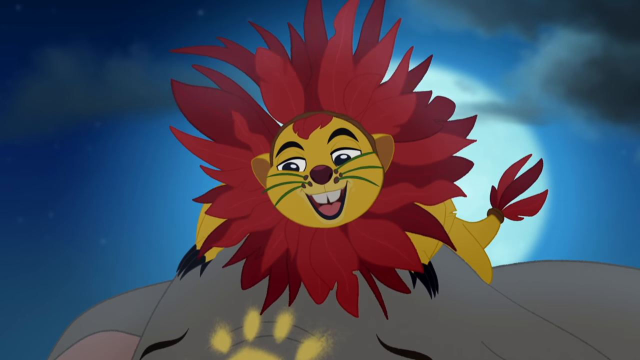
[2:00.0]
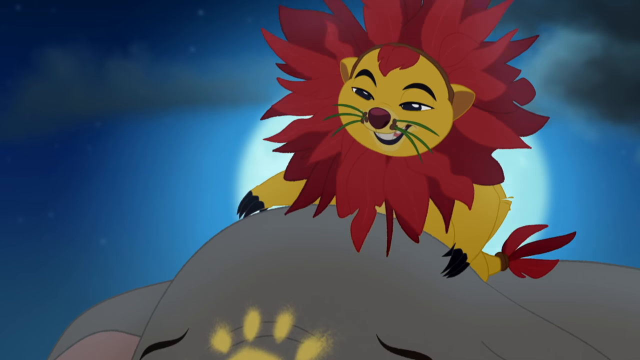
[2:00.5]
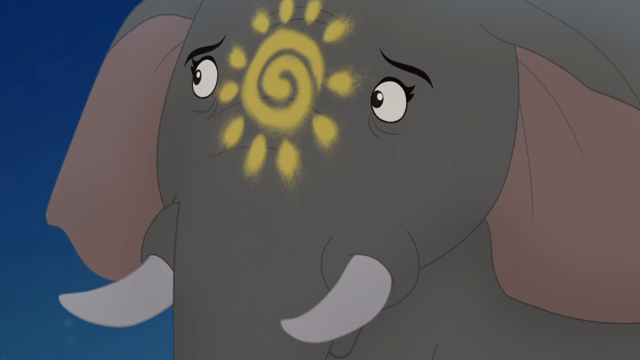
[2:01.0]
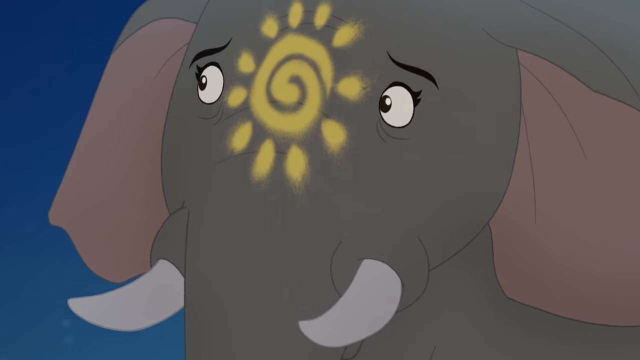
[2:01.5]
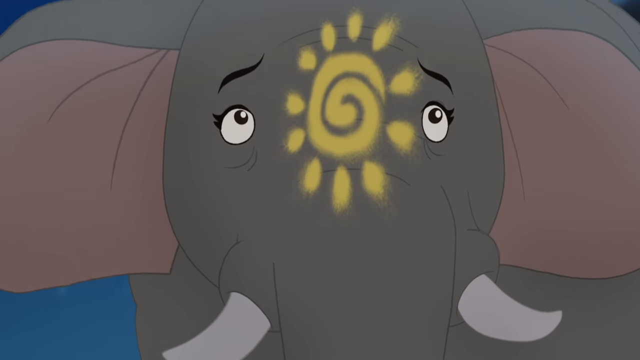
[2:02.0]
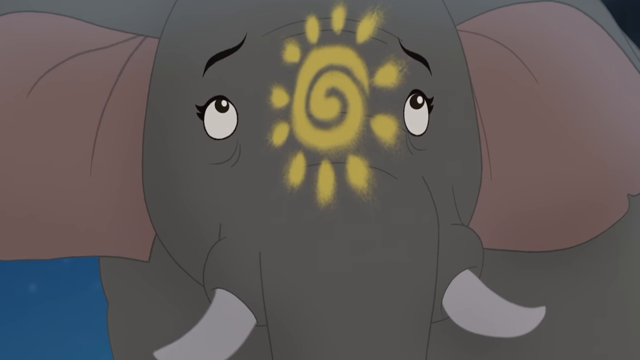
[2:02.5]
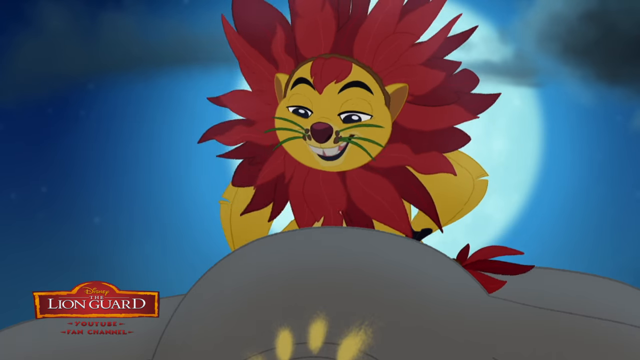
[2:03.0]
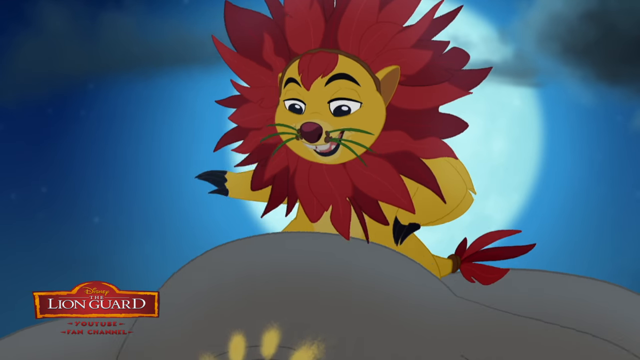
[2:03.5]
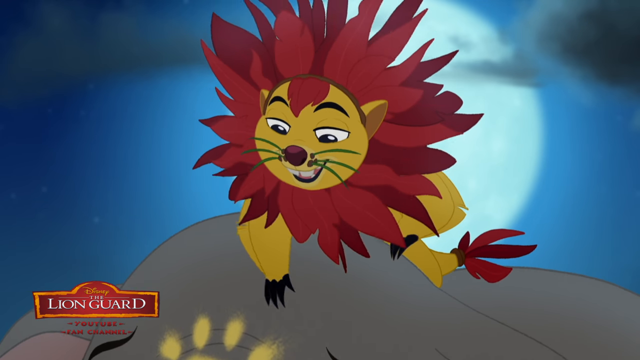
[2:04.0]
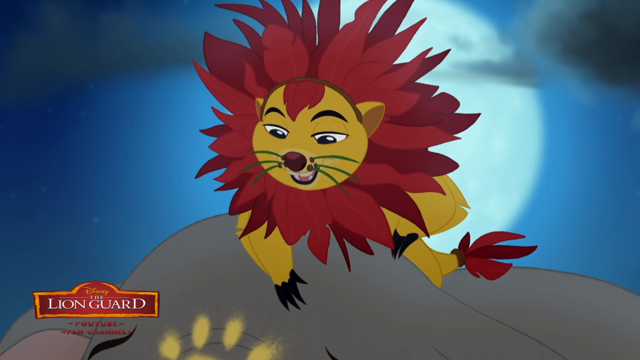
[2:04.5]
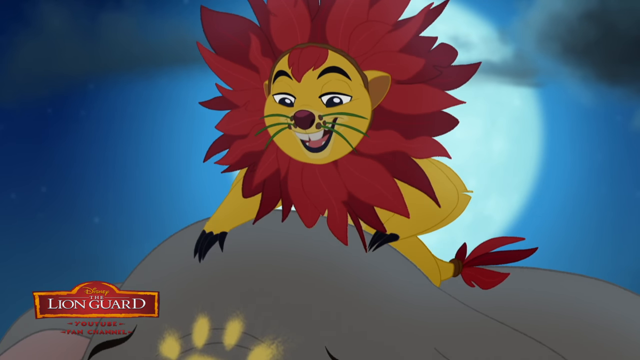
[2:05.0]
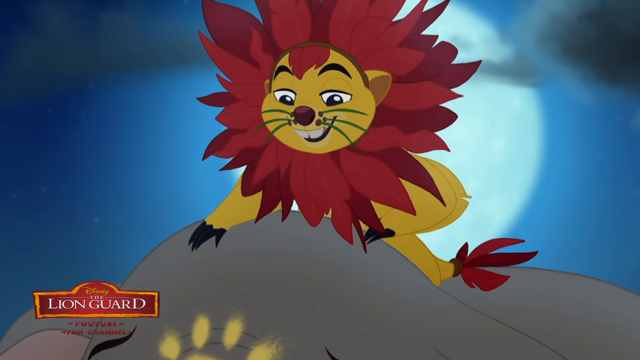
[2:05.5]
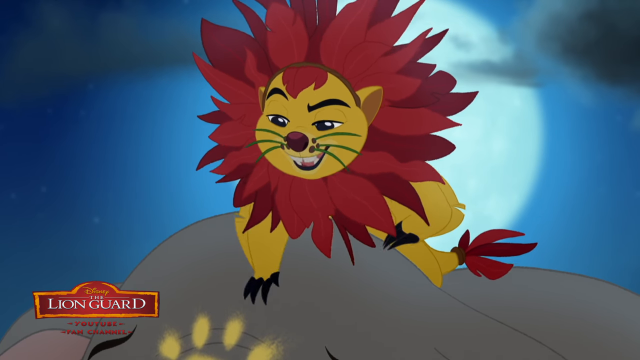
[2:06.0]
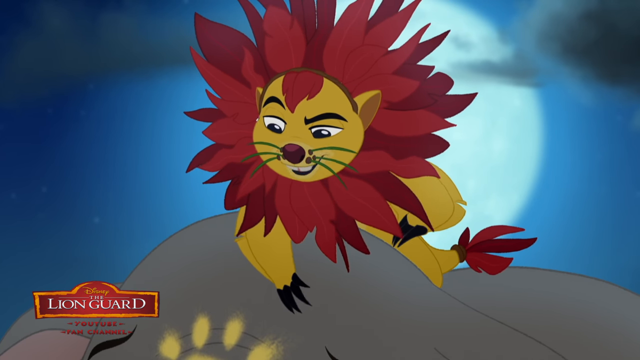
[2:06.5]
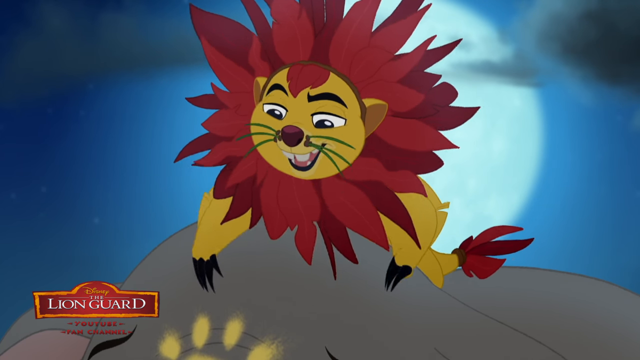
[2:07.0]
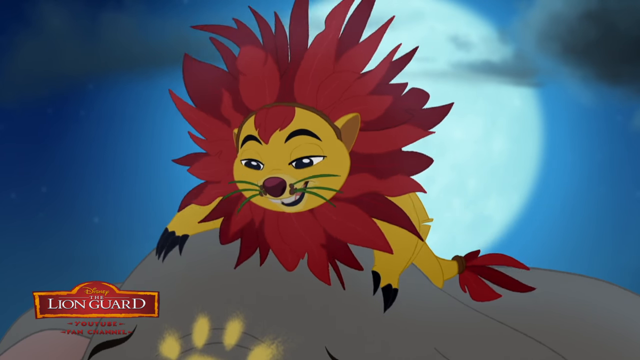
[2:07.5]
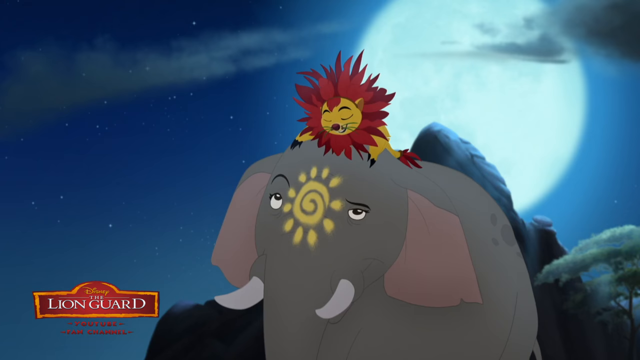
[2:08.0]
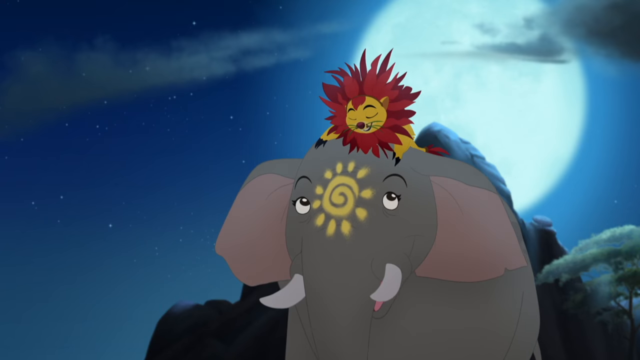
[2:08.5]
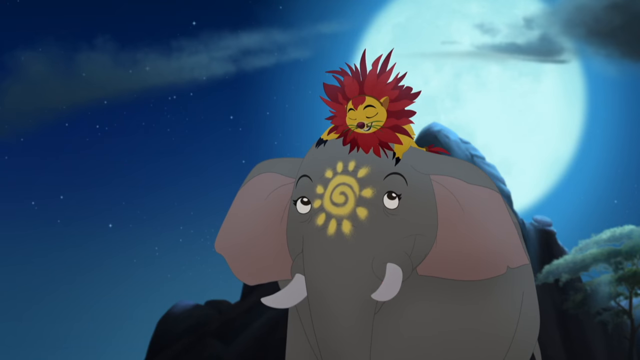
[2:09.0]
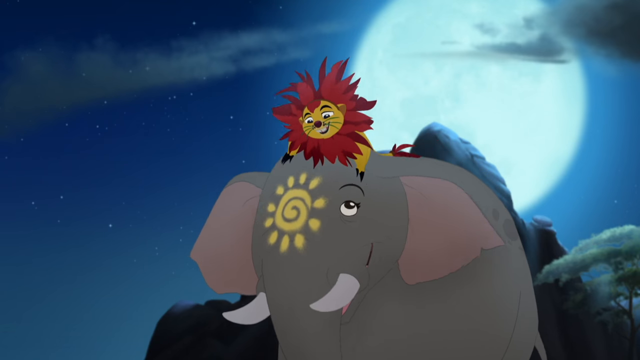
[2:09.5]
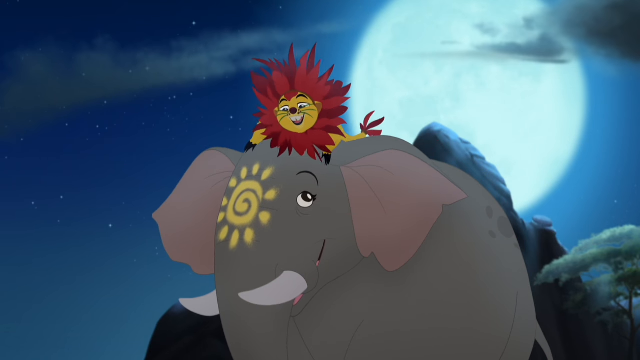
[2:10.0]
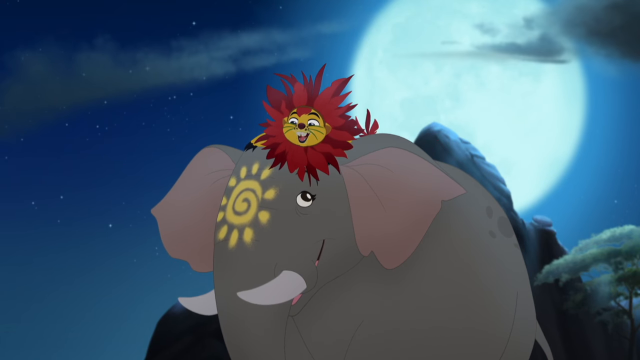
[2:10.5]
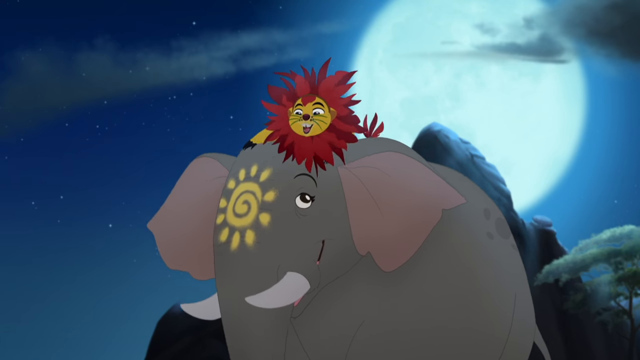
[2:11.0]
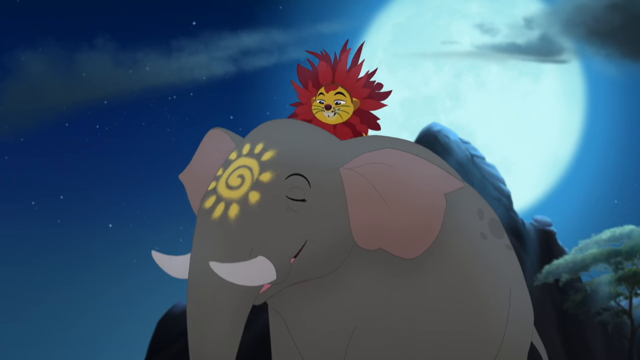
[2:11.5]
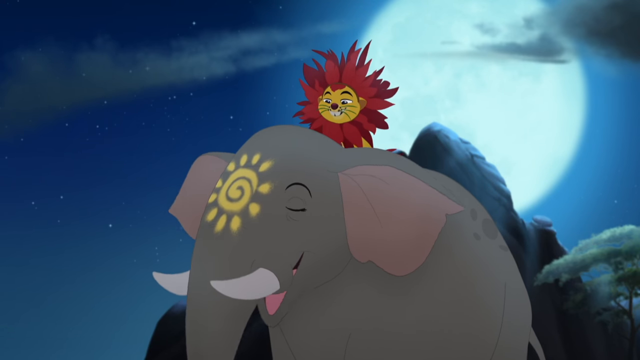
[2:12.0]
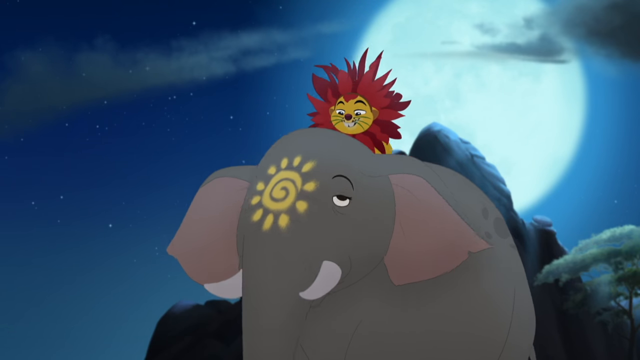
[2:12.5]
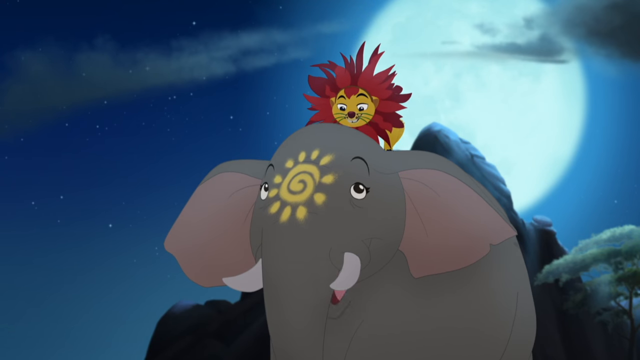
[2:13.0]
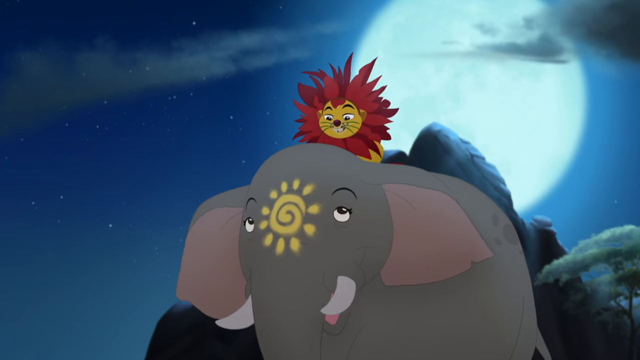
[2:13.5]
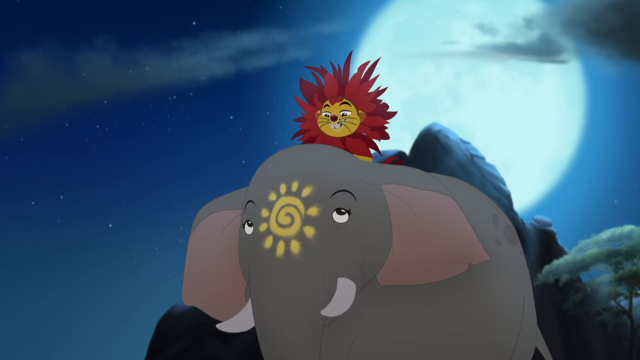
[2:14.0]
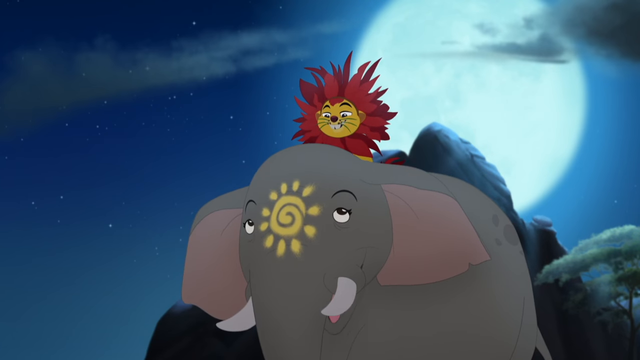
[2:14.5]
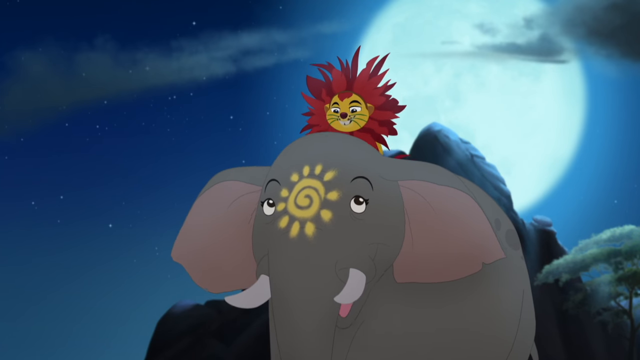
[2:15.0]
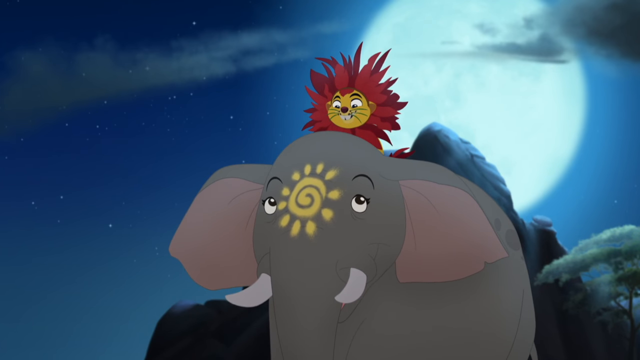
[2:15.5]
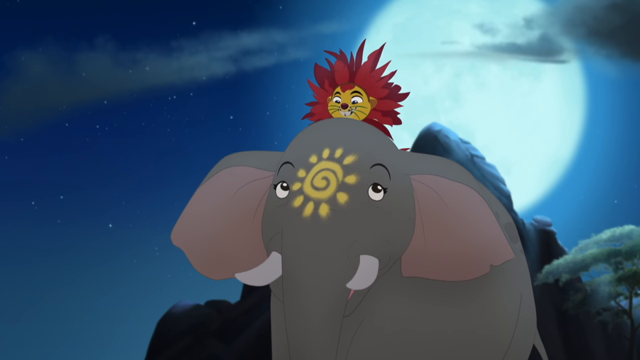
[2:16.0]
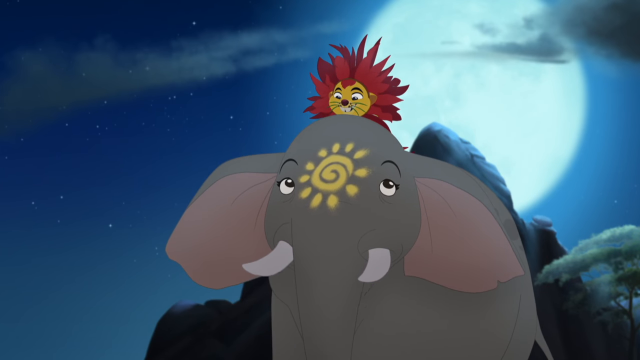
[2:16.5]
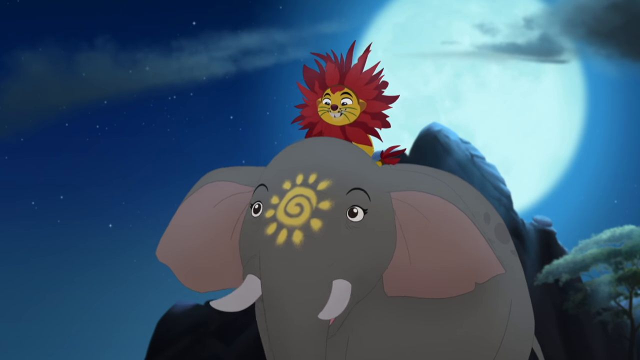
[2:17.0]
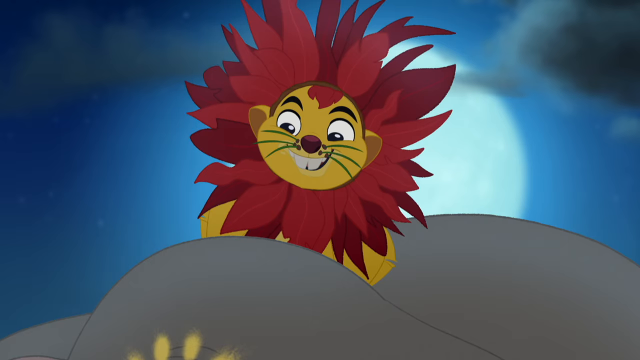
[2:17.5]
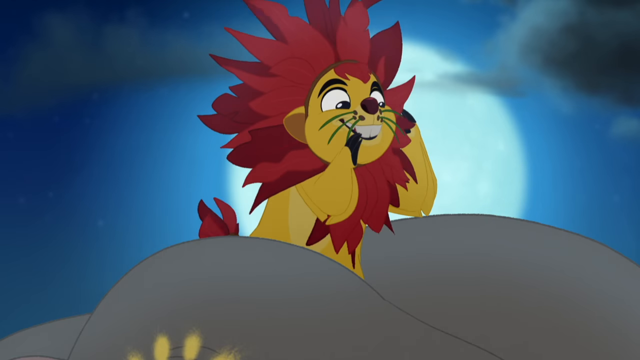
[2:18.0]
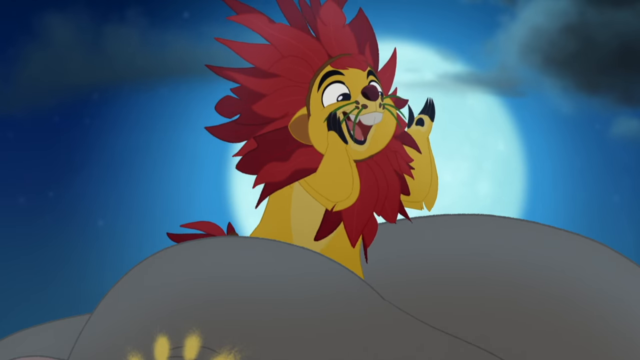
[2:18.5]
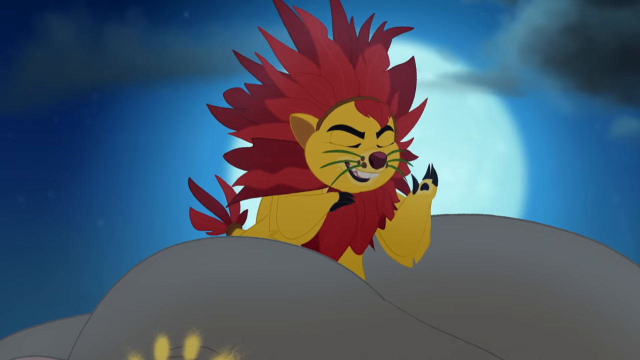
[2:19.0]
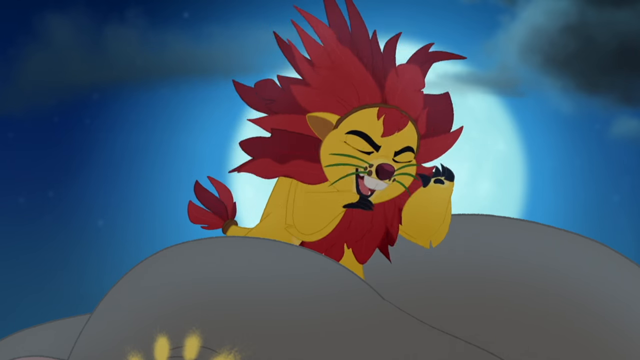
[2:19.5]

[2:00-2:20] A cartoonish lion, in what looks like some kind of cartoon feature, has yellow fur with a red mane around its head and red on the end of its tail, green whiskers and black claws. The red around its head and on its tail might be feathers rather than fur, and it kind of looks tribal. A moon is behind it in the background. A gray elephant with pinkish insides of its ears appears. The lion is then shown again with the moon in the background, talking. The lion continues talking to the big elephant, and the elephant answers; they seem to be having a discussion.